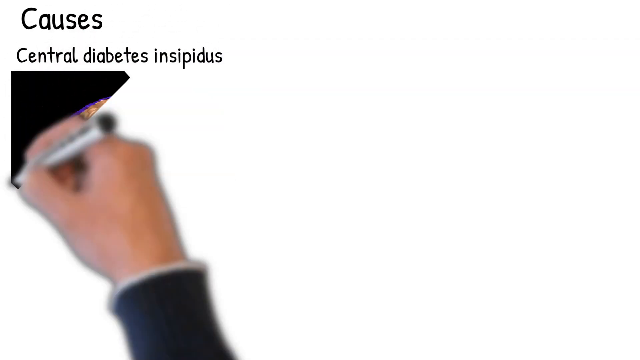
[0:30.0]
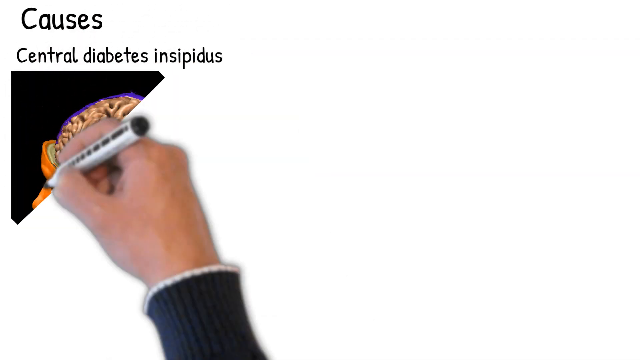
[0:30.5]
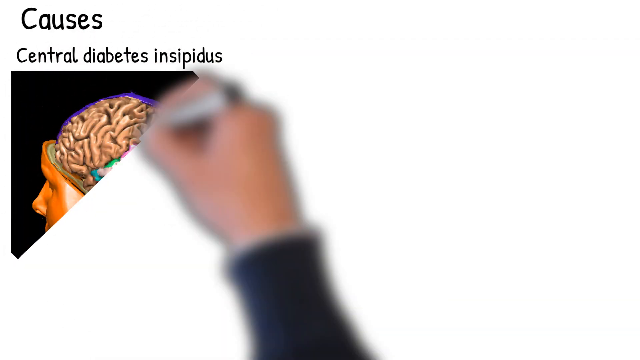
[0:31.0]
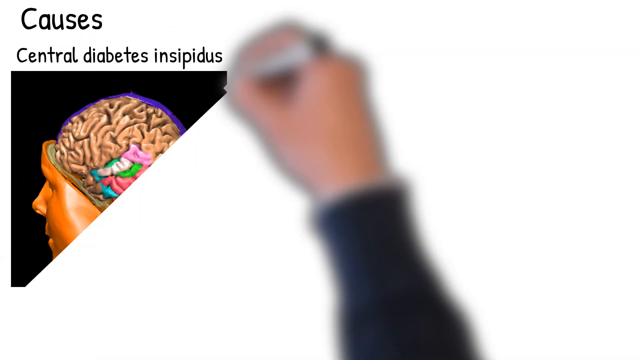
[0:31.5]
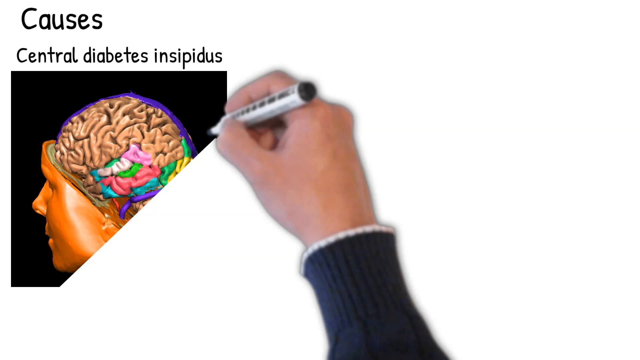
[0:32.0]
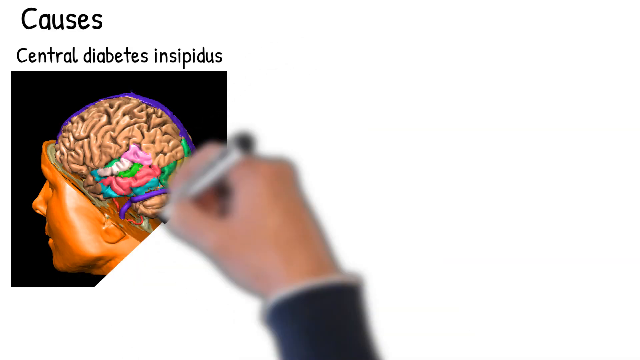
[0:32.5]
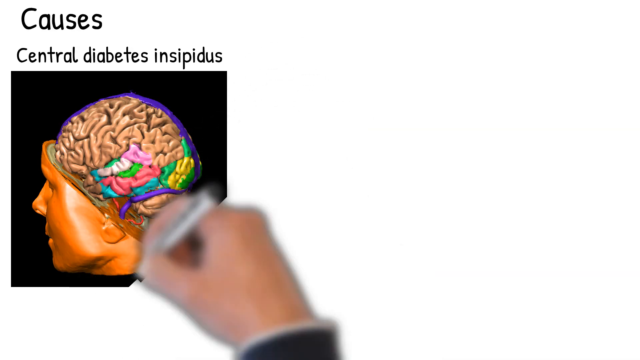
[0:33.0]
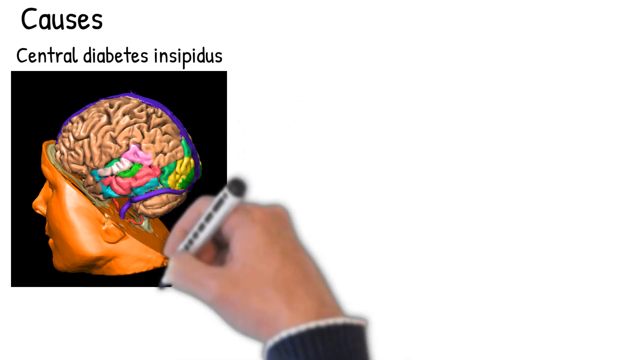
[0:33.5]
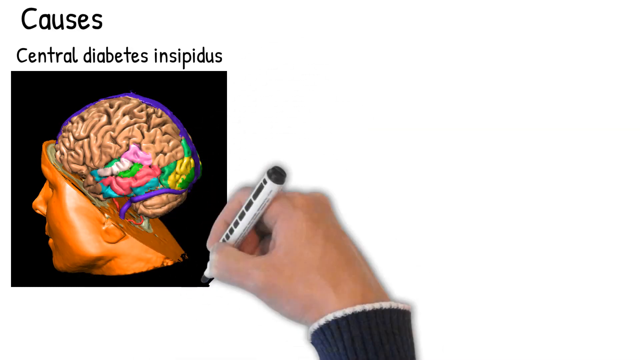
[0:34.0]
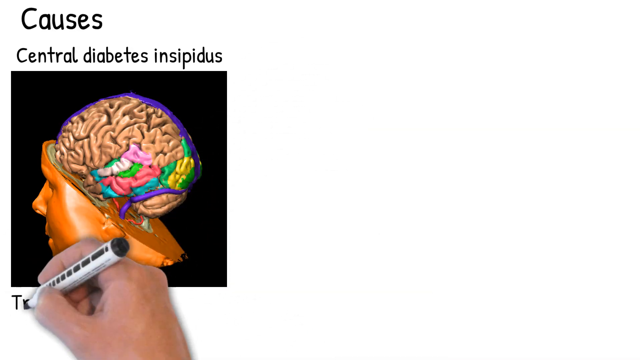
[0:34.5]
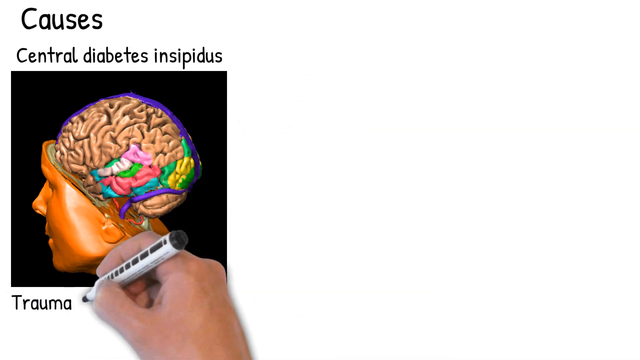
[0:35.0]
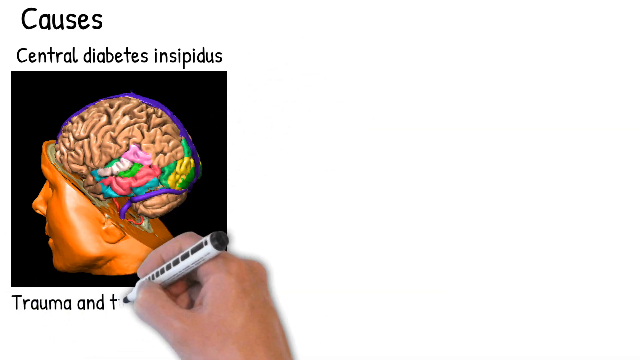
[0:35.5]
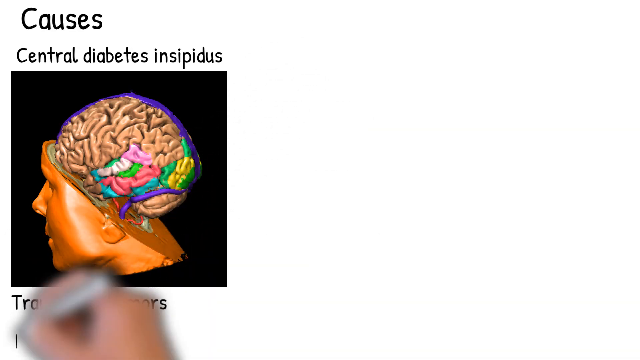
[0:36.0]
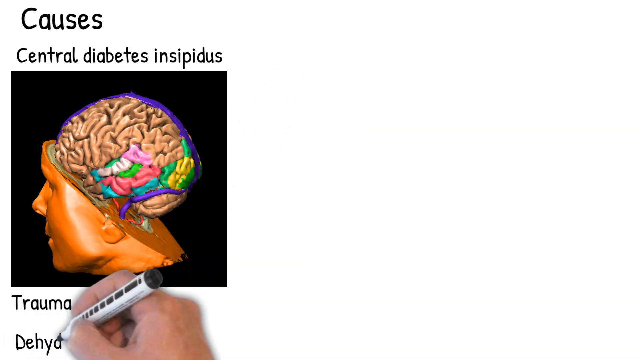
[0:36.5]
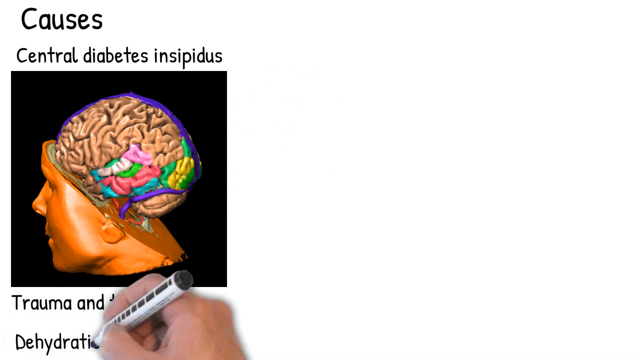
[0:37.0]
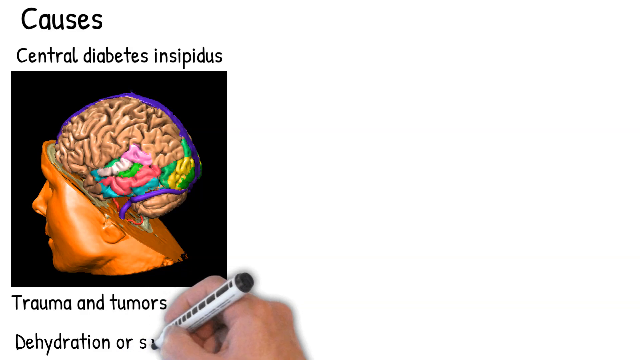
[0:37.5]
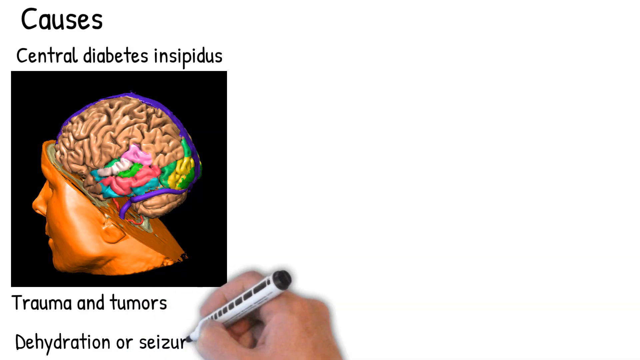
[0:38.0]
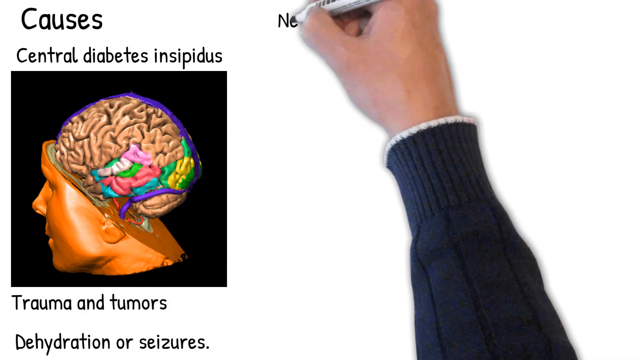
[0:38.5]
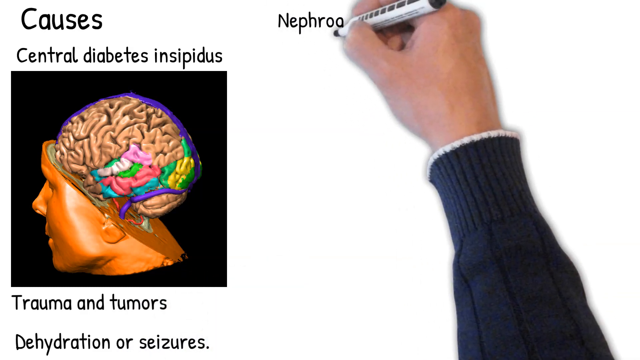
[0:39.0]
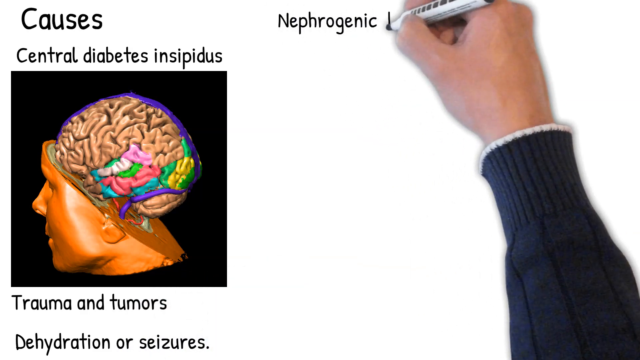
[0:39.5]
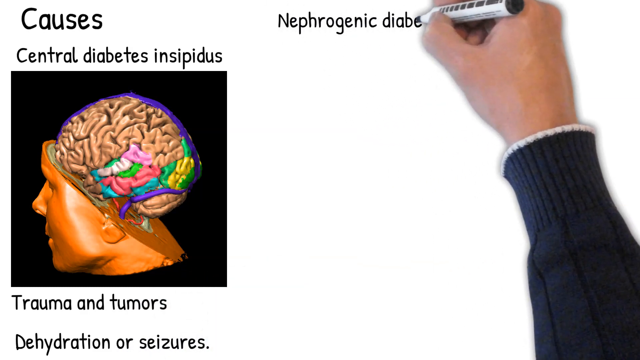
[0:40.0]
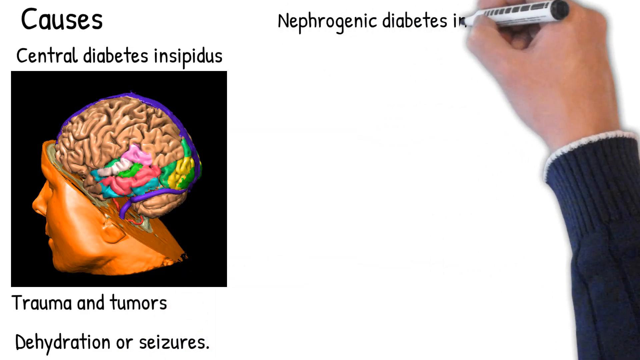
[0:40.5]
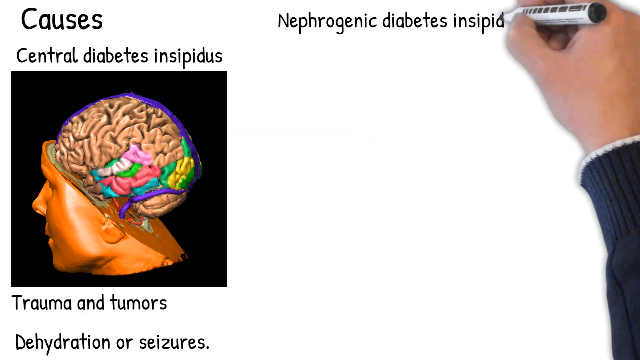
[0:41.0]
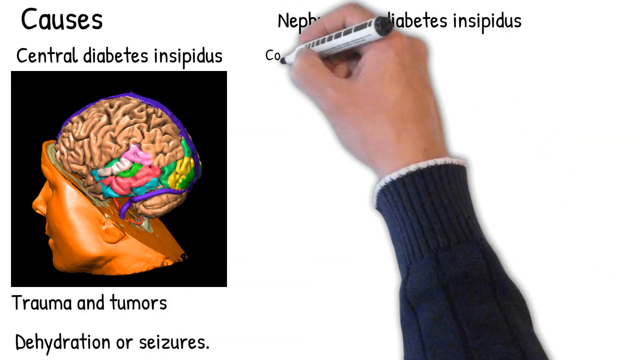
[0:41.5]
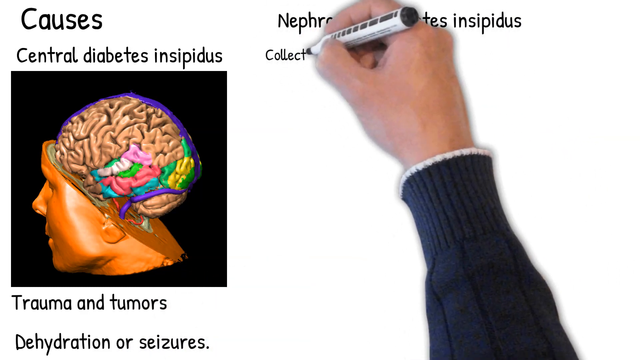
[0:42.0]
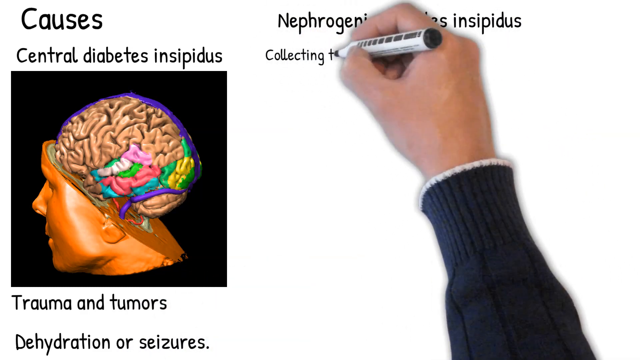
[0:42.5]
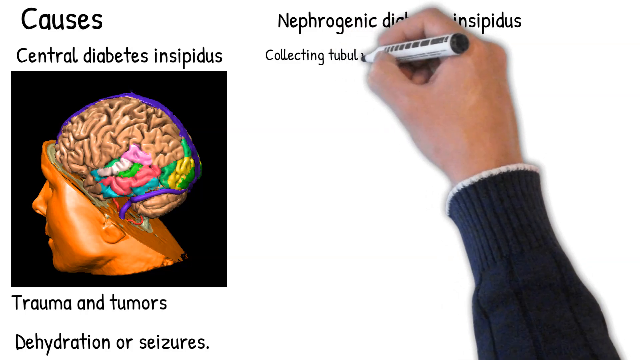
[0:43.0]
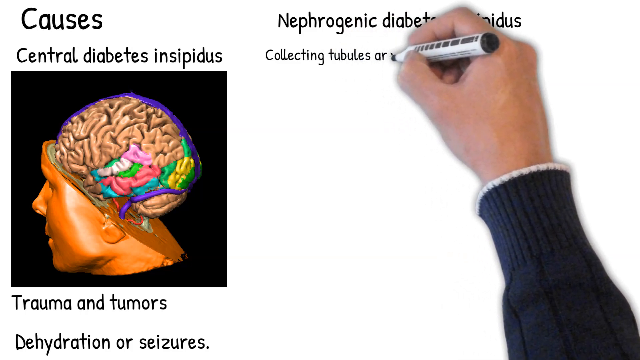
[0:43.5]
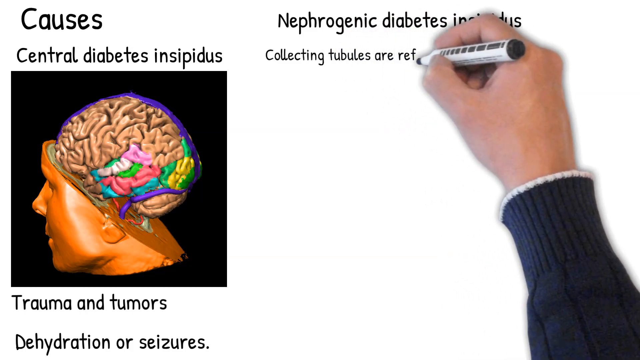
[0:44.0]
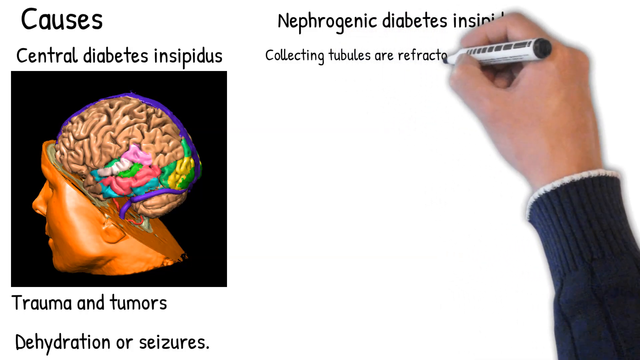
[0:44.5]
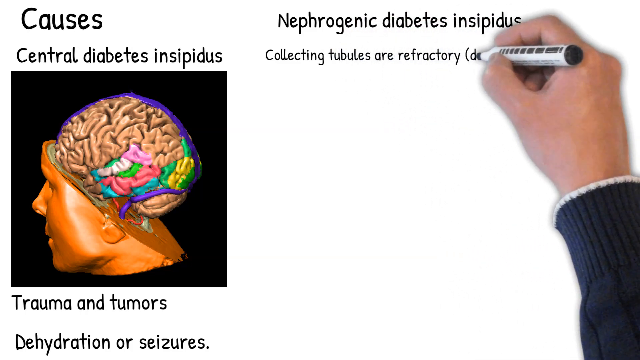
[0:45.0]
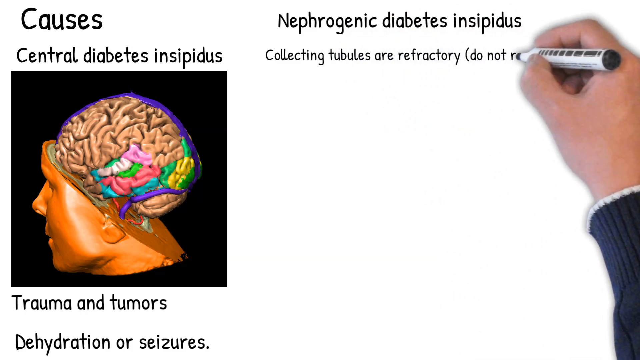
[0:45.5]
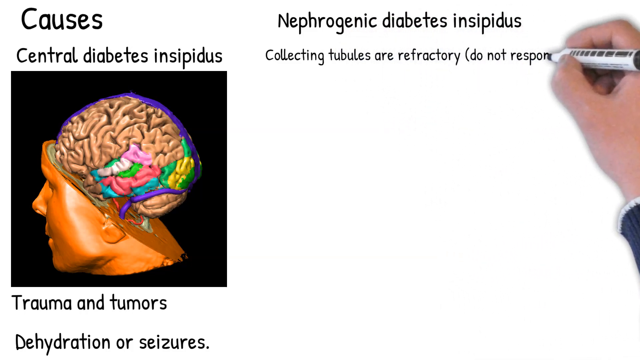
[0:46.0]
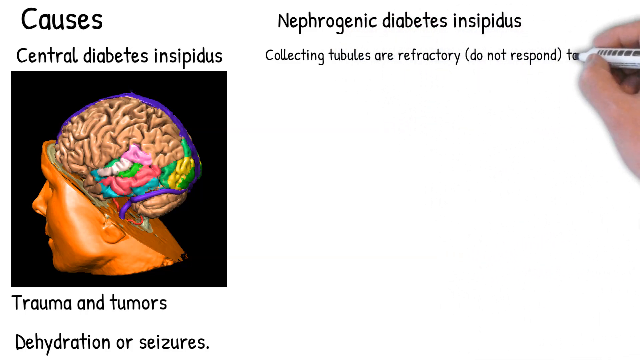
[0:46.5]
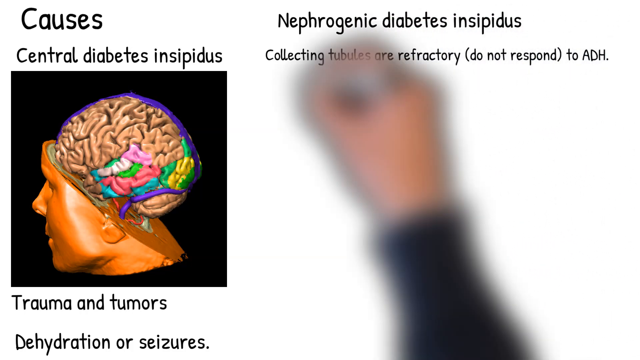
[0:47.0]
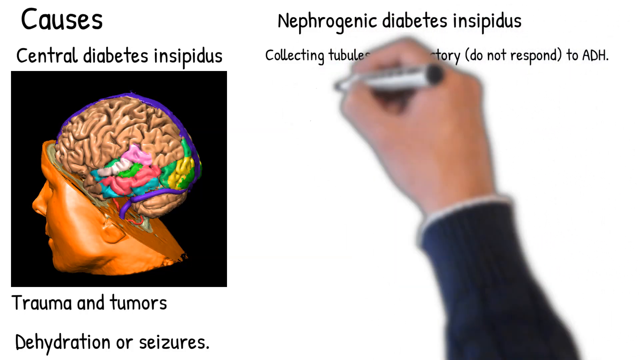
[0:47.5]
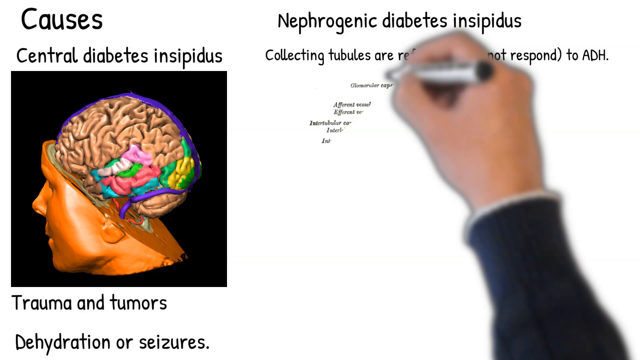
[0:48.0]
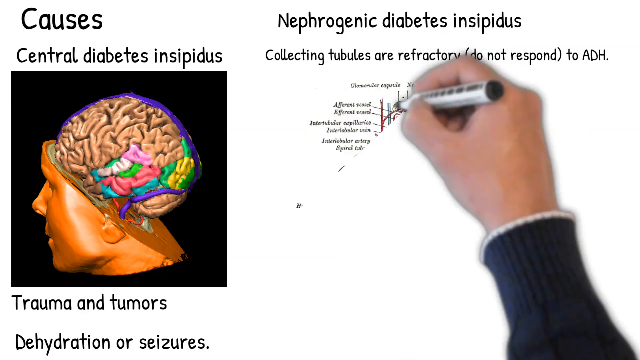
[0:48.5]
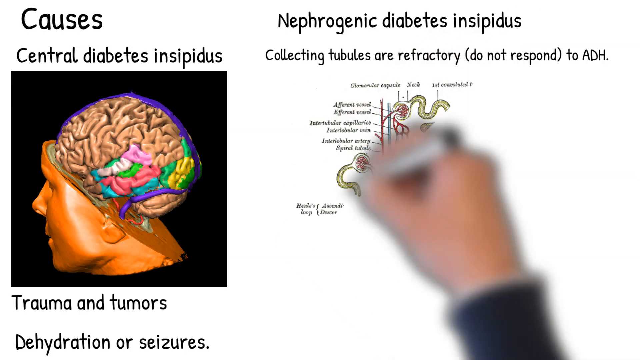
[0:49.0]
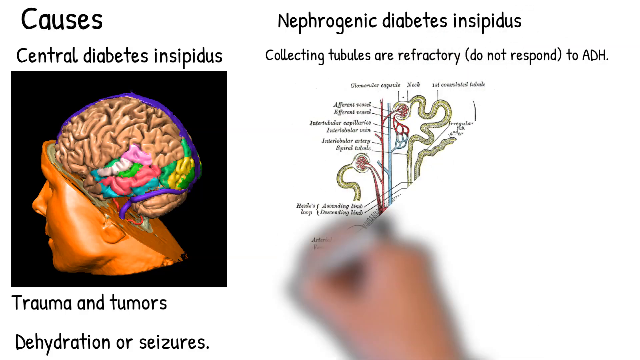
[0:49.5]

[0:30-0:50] He completes the drawing for the causes of central diabetes insipidus: an illustration of a man whose head is sliced diagonally to show the brain, with different colors in the brain denoting different ideas. To complete the picture he writes "trauma and tumors, dehydration or seizures." Next to this picture he writes "nephrogenic diabetes insipidus, collecting tubules are refractory, do not respond to ADH." He then very quickly starts to draw what looks like part of the human body; it is very small and hard to make out. The illustrations are drawn very fast.